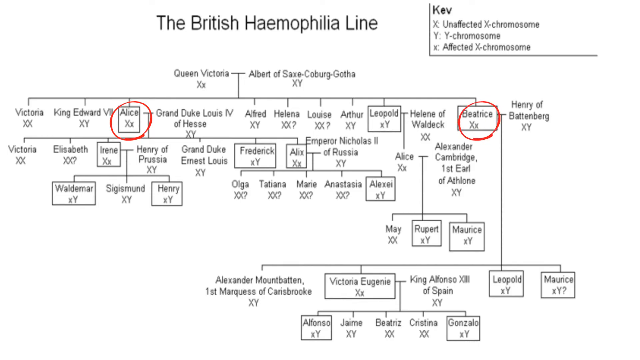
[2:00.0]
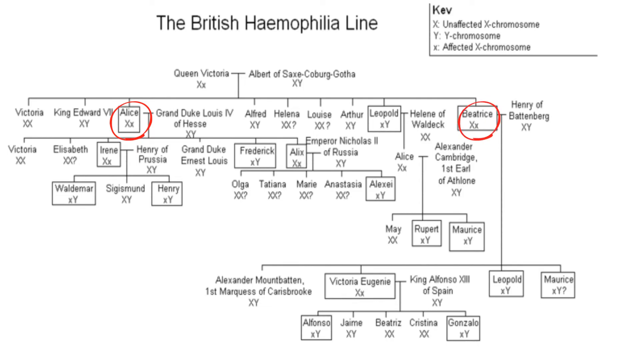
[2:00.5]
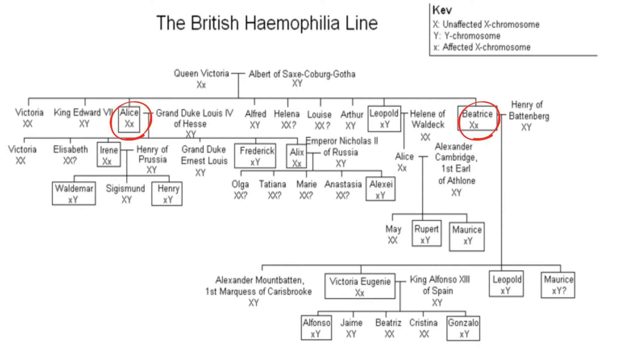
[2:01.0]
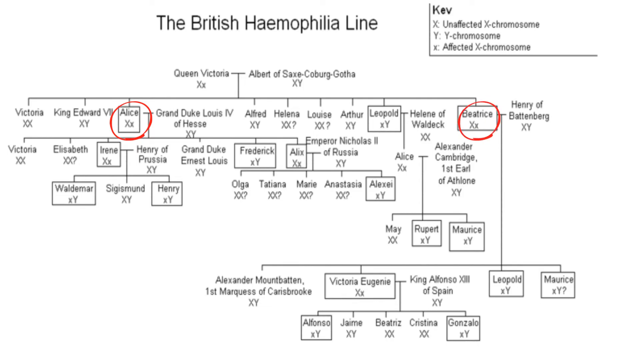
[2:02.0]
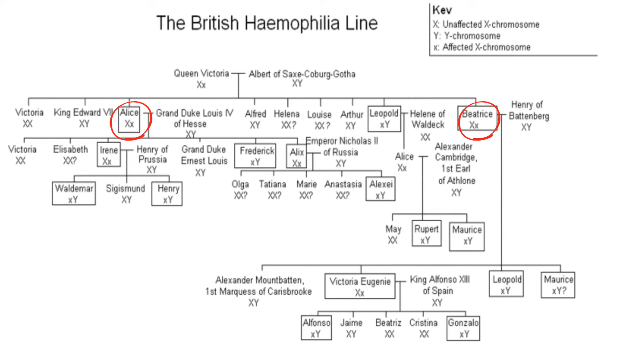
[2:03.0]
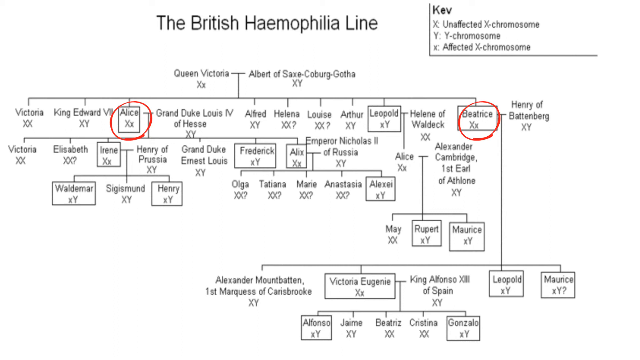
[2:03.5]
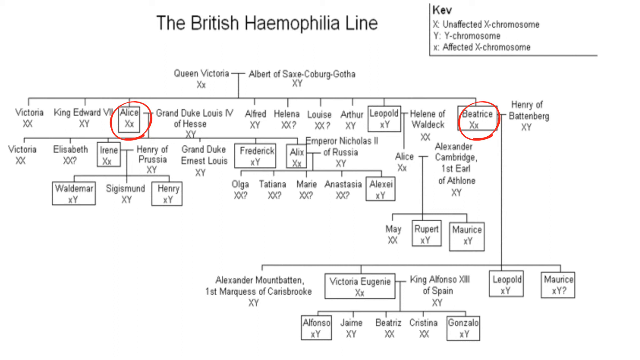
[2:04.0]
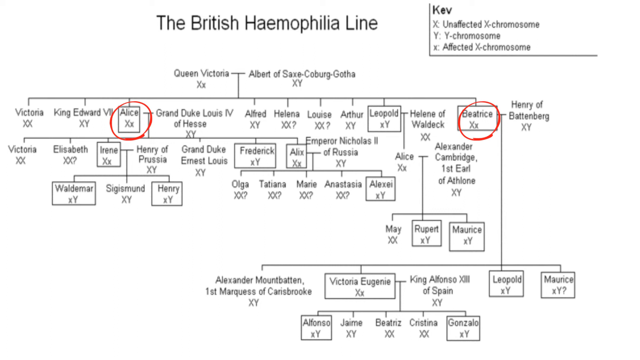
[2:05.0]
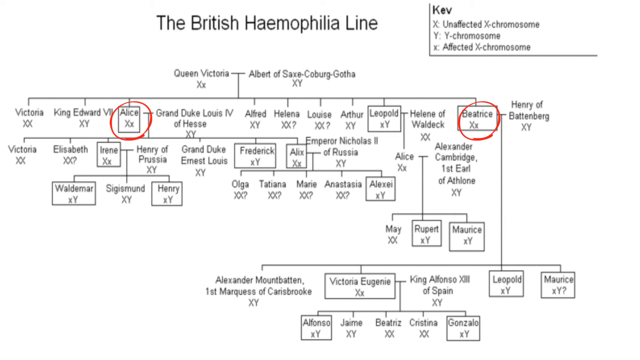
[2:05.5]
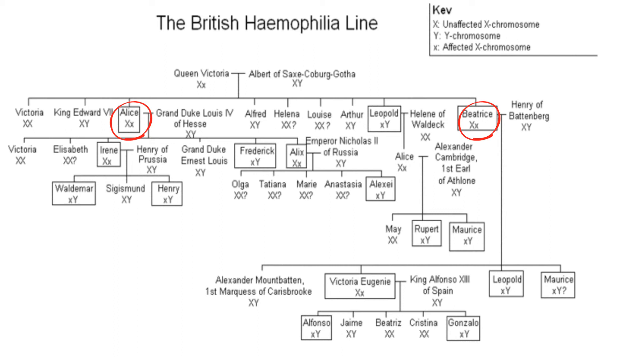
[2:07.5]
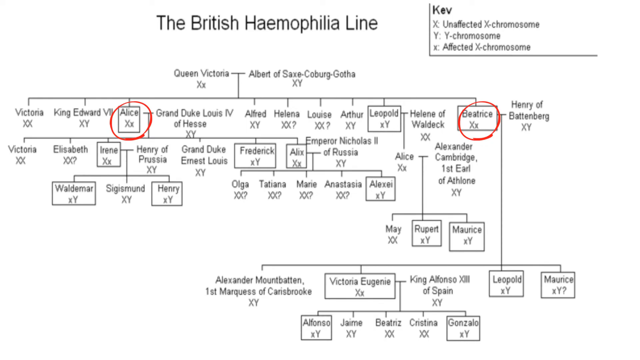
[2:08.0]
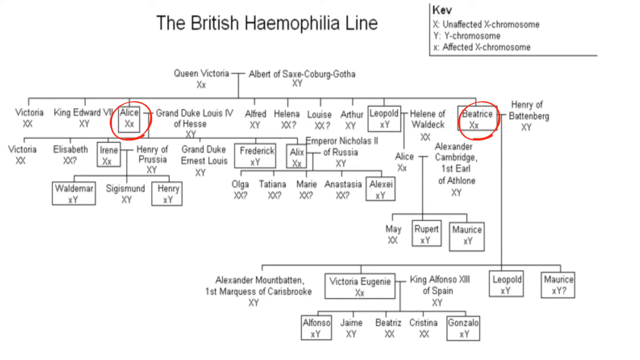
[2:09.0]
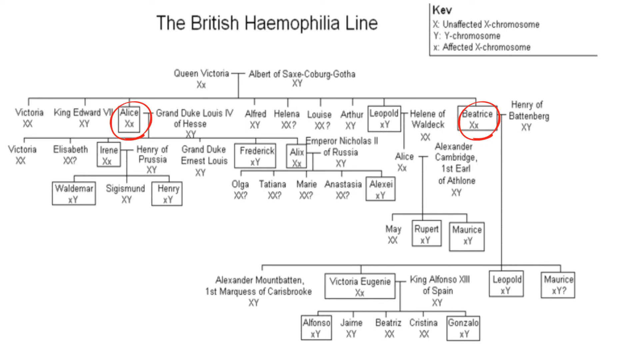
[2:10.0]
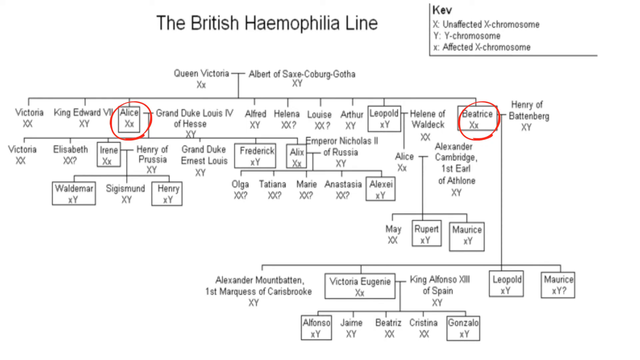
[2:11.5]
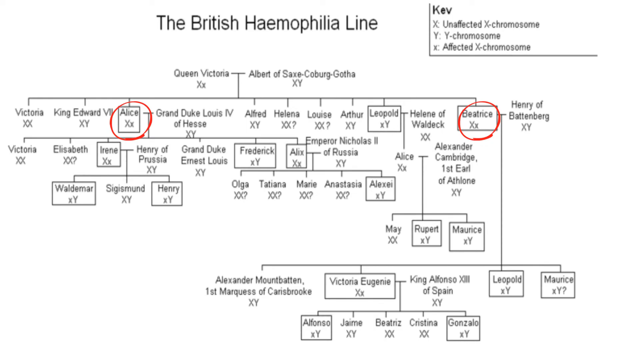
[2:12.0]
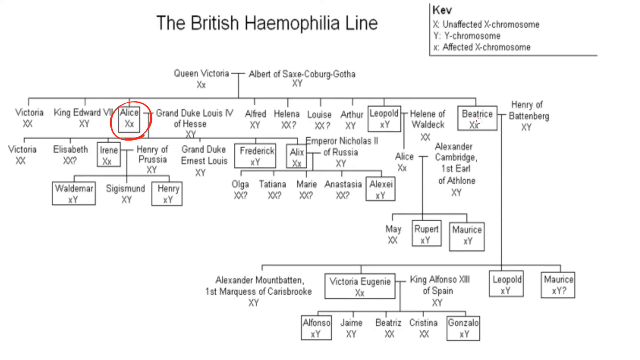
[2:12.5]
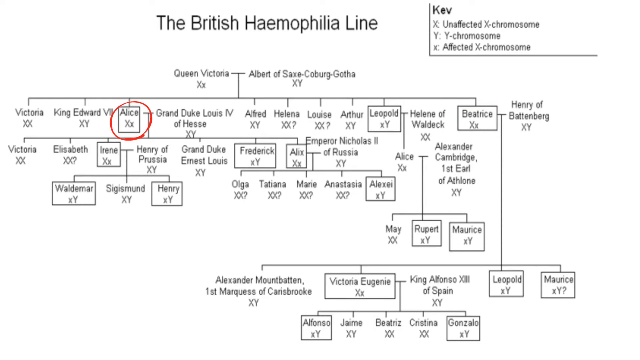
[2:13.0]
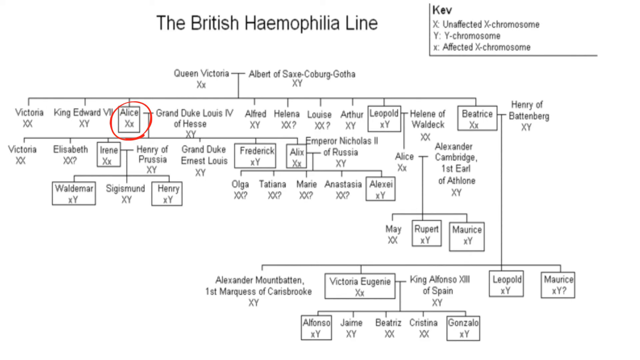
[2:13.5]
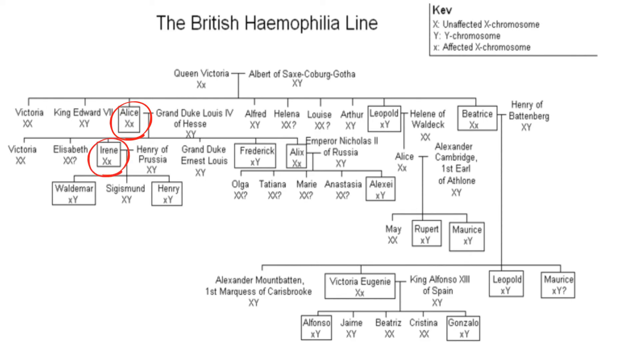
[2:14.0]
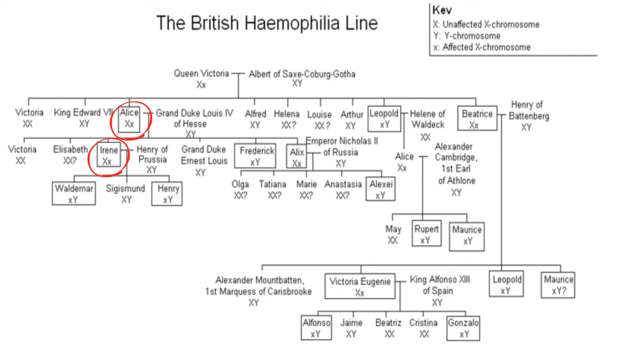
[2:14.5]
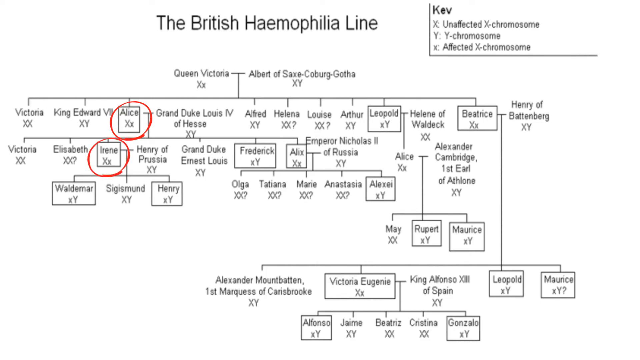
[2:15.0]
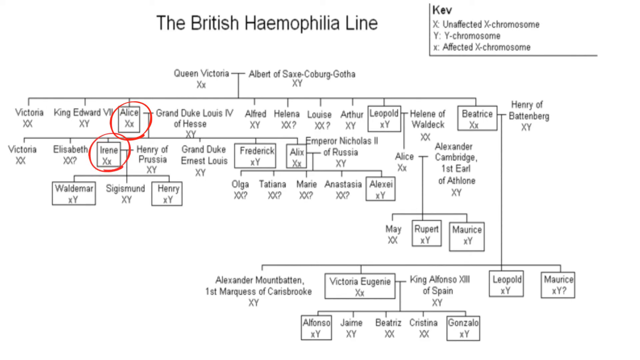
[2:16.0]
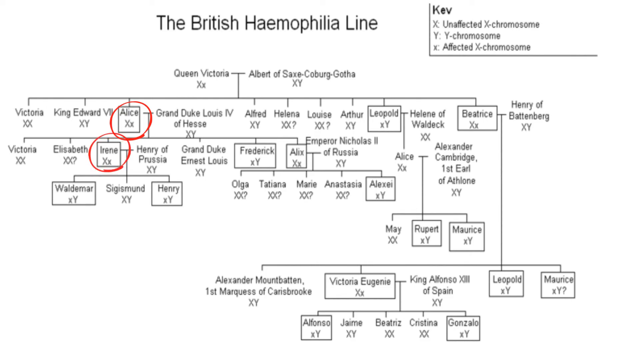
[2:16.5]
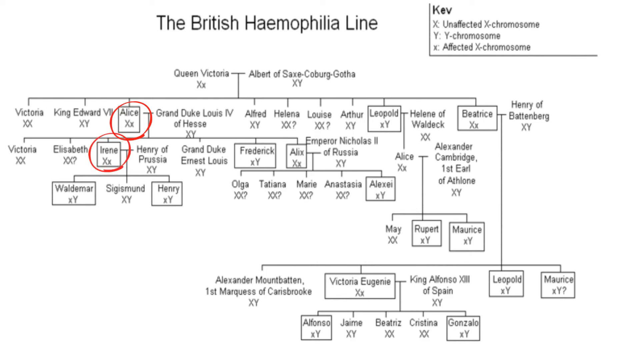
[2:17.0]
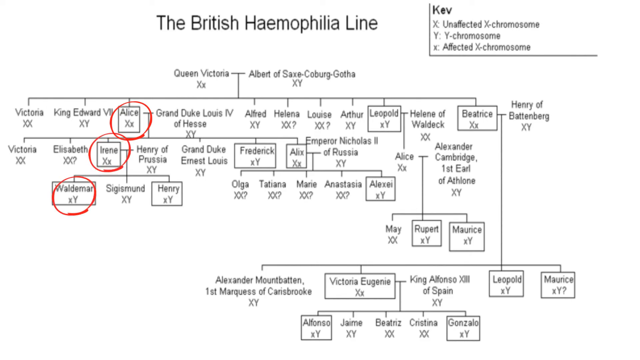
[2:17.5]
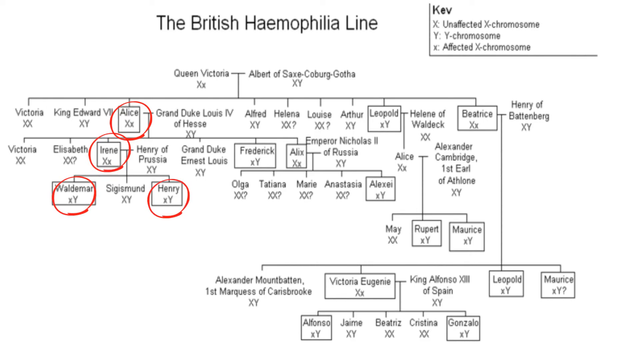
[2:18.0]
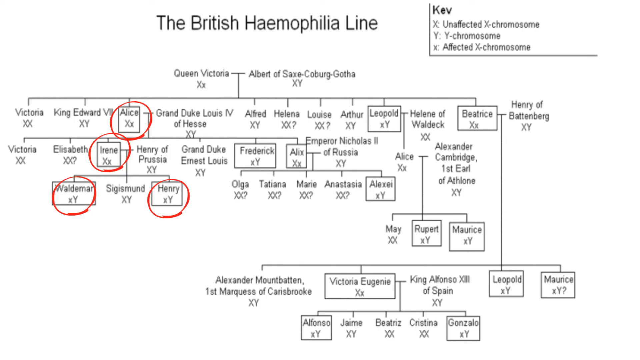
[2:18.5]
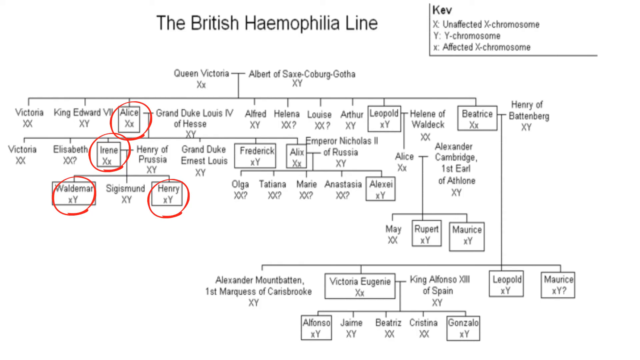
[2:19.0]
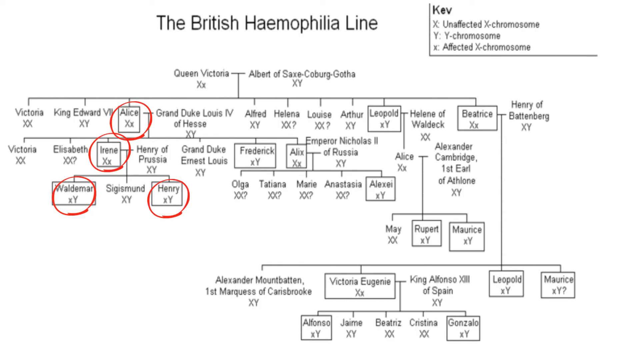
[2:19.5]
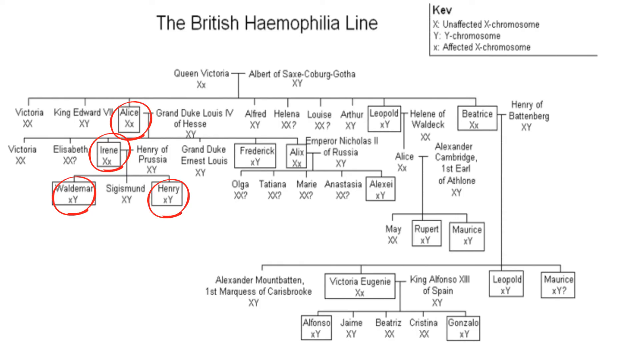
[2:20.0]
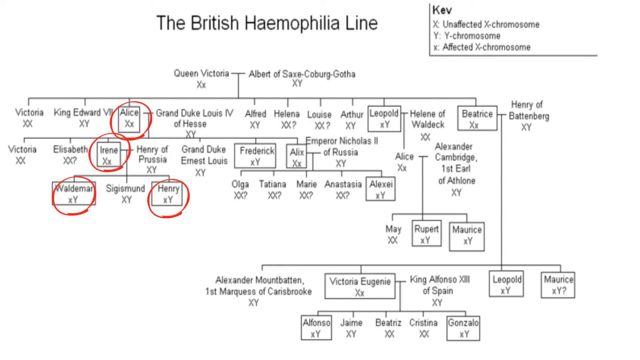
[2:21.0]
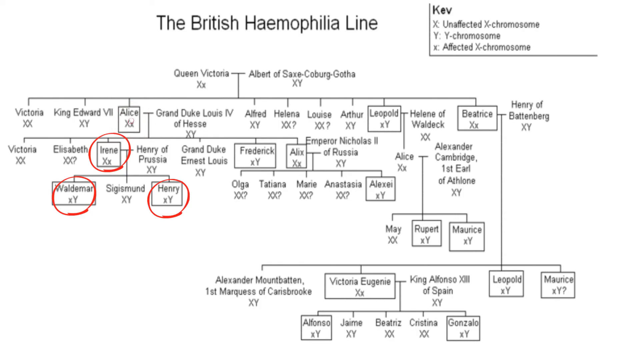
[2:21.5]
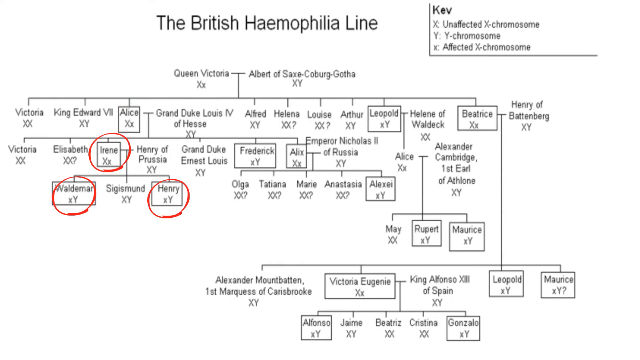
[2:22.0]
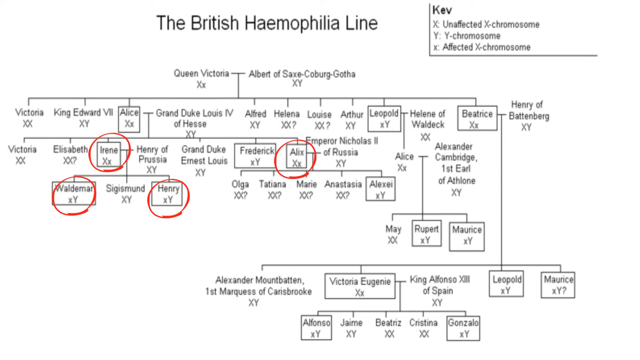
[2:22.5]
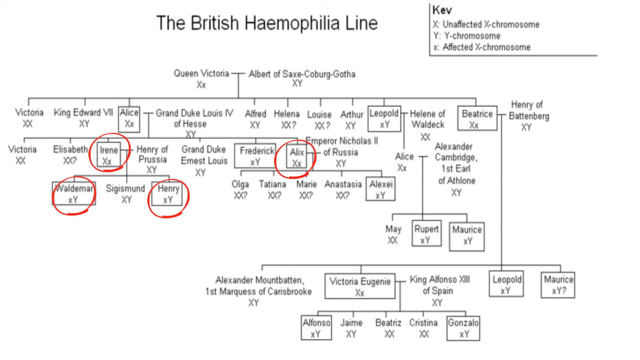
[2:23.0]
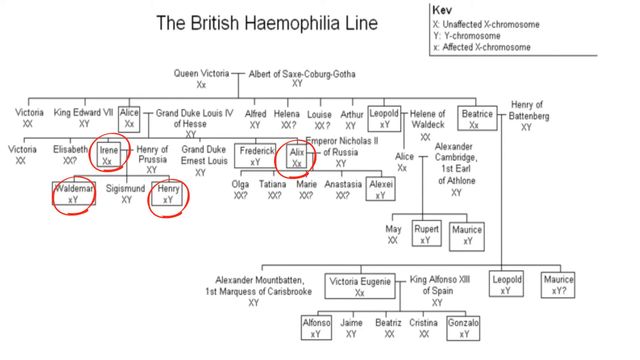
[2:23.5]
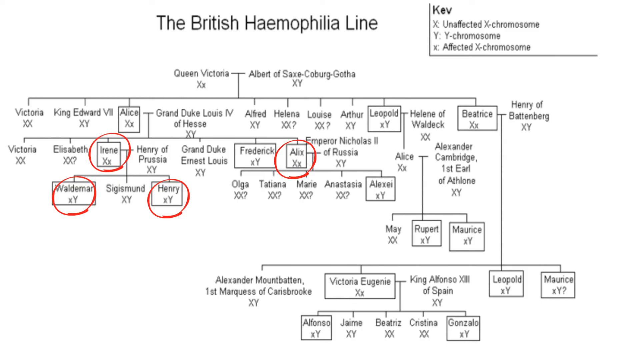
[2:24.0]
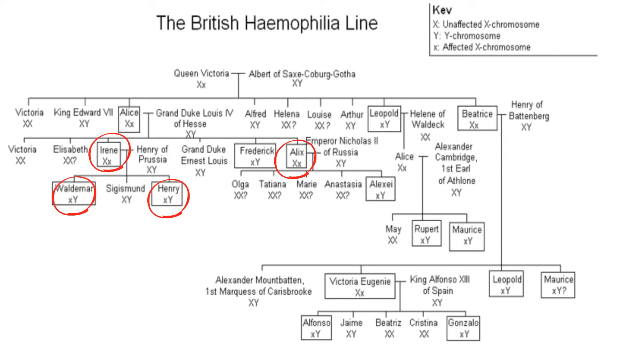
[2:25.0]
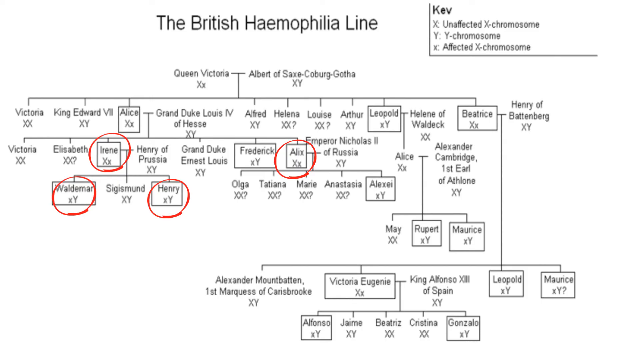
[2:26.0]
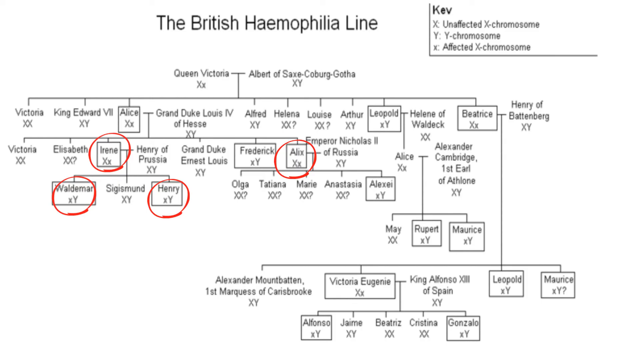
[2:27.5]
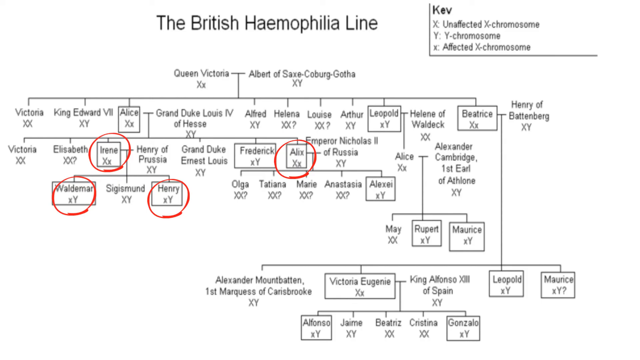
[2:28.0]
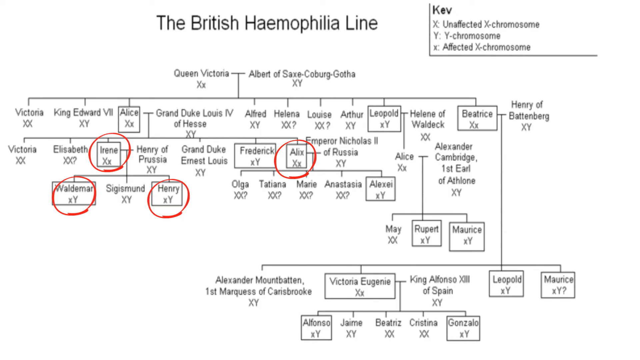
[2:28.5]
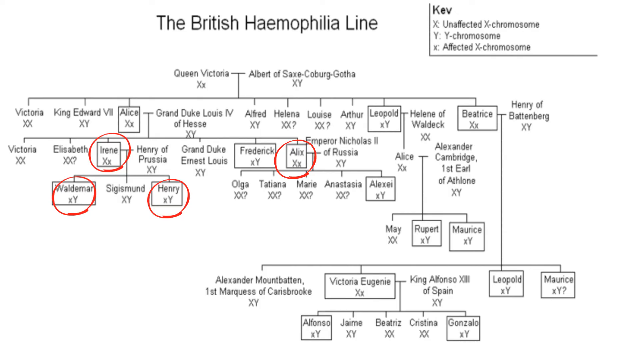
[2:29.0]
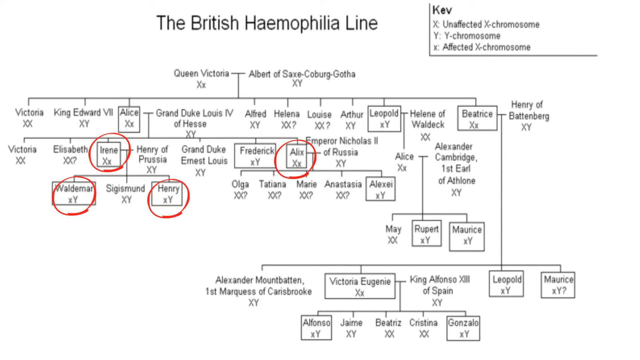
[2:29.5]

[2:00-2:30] A graph depicts the British hemophilia line. At the top is the name Queen Victoria with a large X and a small x, and a small line going to the right to Albert, with a large X and a large Y. A line goes down to another line showing names and their chromosomes. On the third line, on the left, is Alice with a large X and a small x, and straight across is Beatrice with a large X and a small x; the two are highlighted with a drawn red circle. There are multiple other lines. The circle around Beatrice disappears. On the line underneath Alice, slightly to the left, is Irene with a large X and a small x. On the line below that, on the left, is Vladimir with a small x and a large Y, and the third person from him is Henry with a small x and a large Y; these are circled in red.